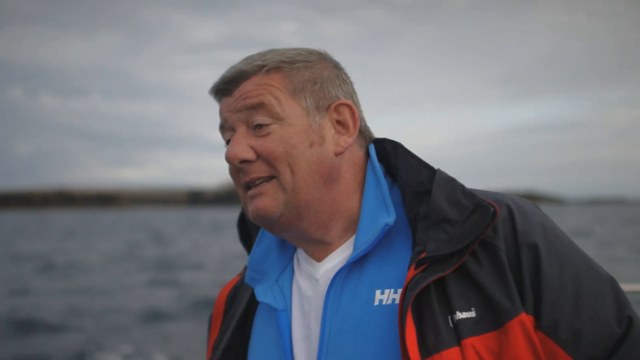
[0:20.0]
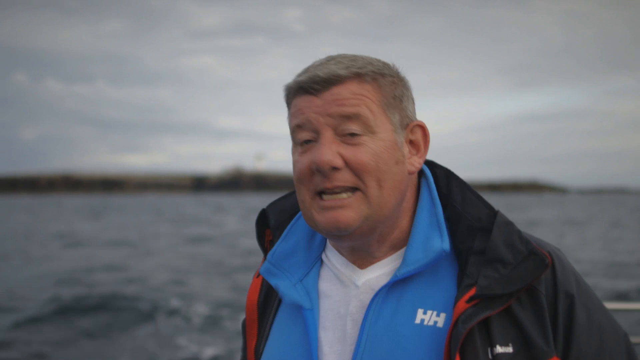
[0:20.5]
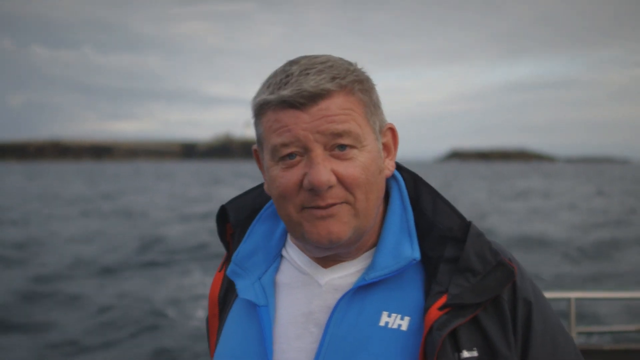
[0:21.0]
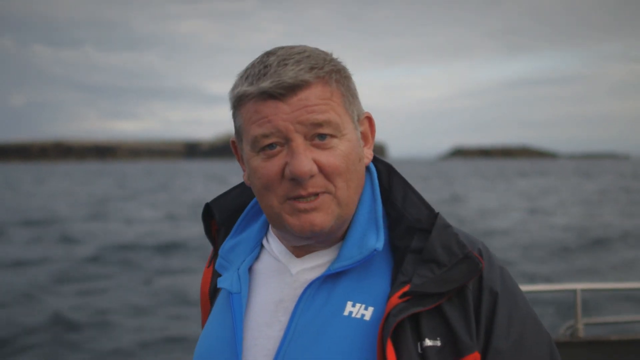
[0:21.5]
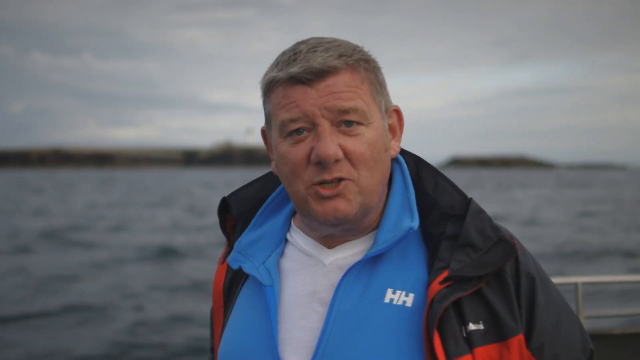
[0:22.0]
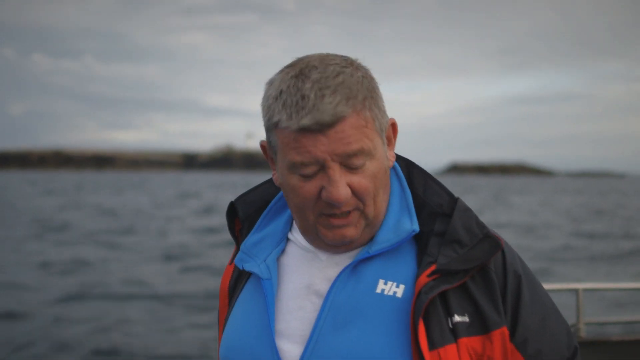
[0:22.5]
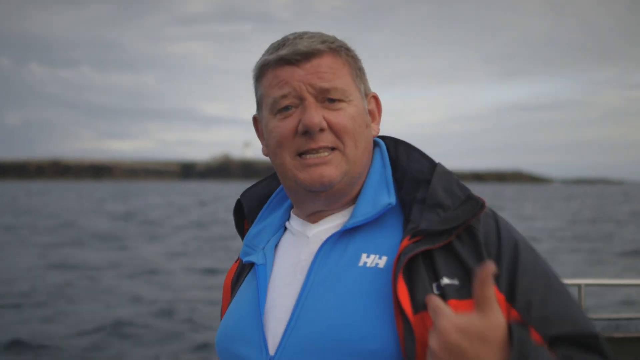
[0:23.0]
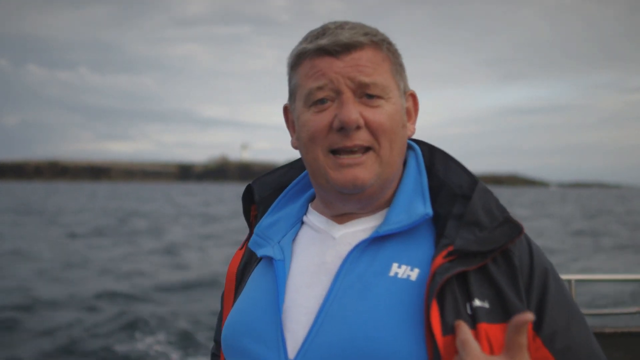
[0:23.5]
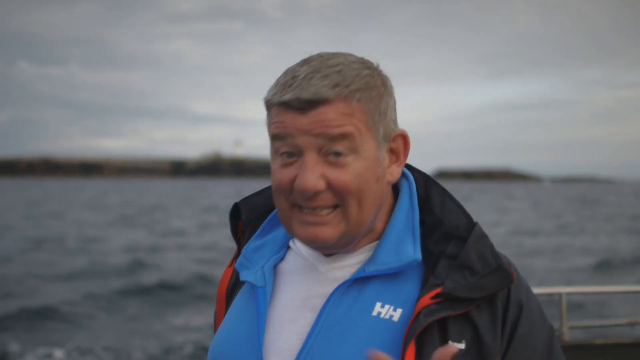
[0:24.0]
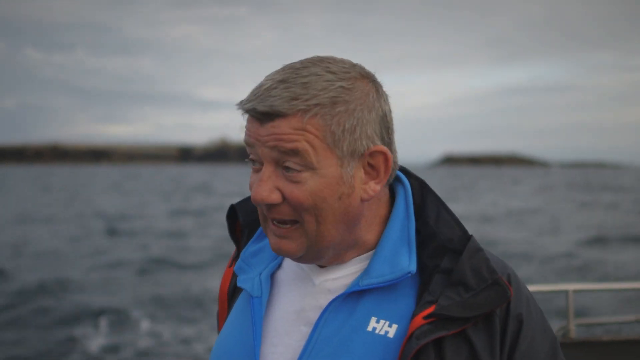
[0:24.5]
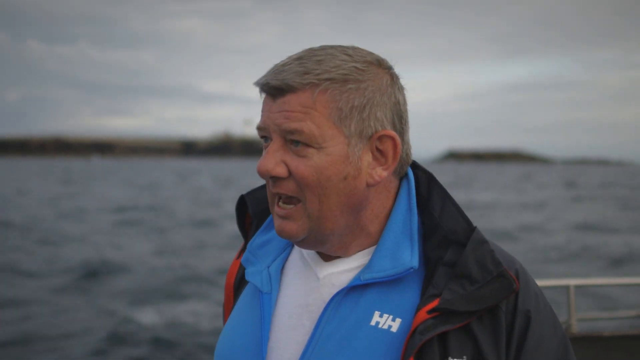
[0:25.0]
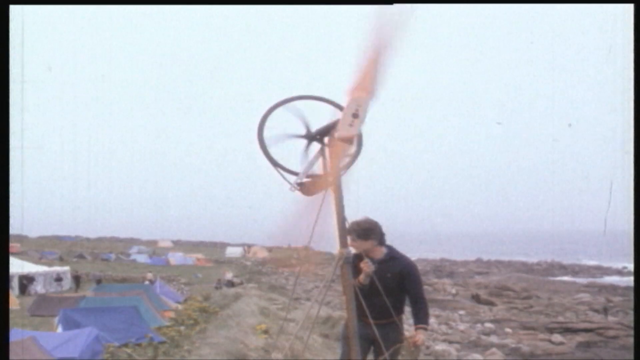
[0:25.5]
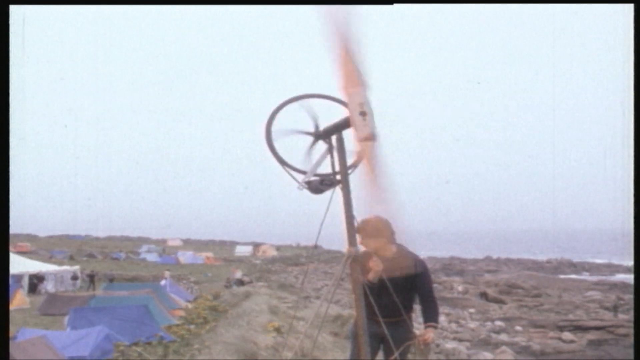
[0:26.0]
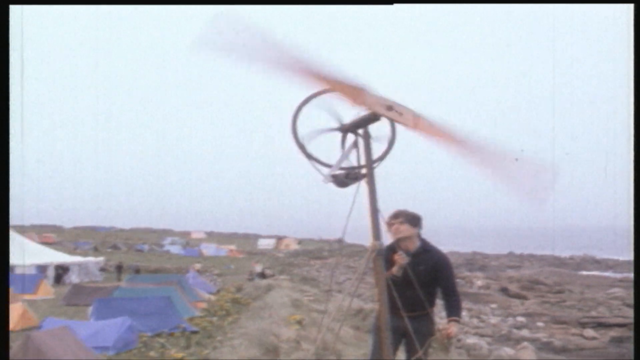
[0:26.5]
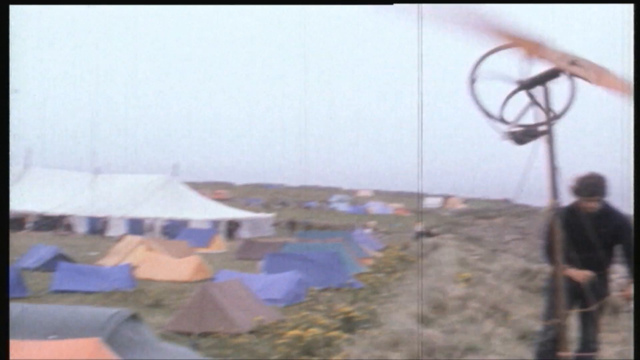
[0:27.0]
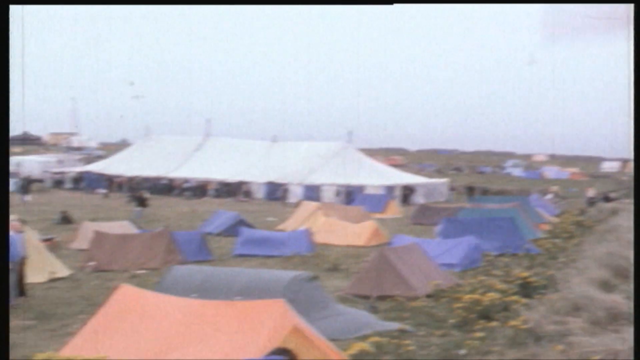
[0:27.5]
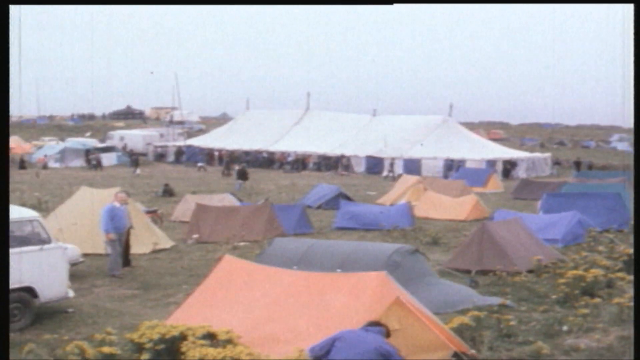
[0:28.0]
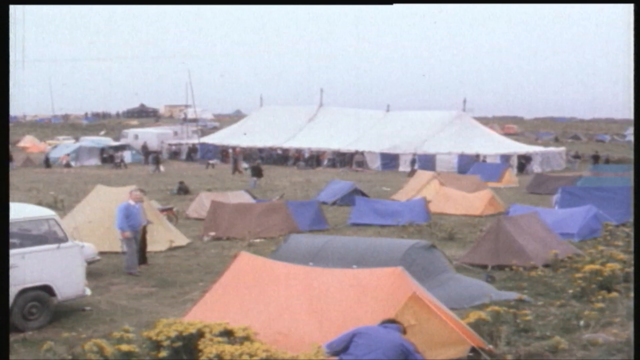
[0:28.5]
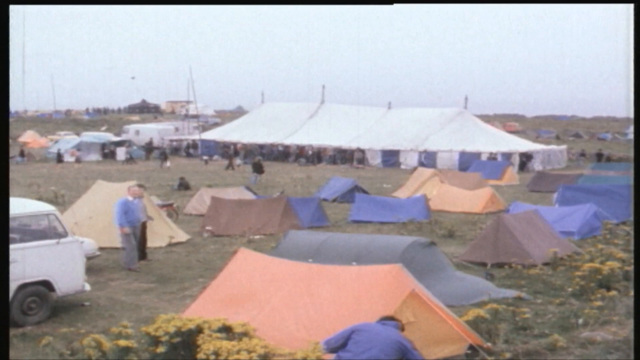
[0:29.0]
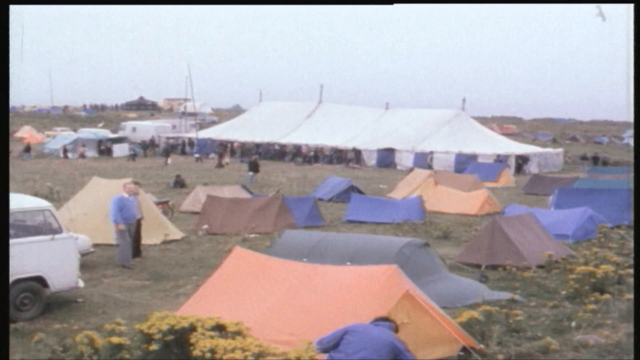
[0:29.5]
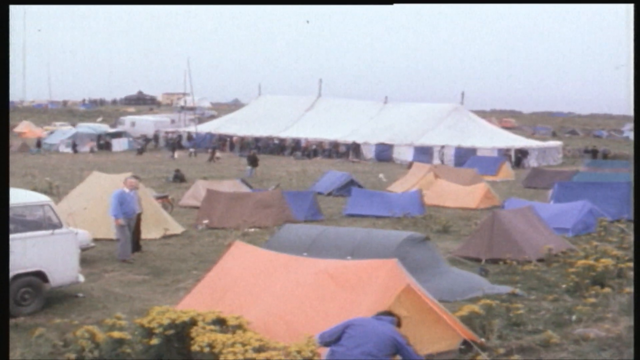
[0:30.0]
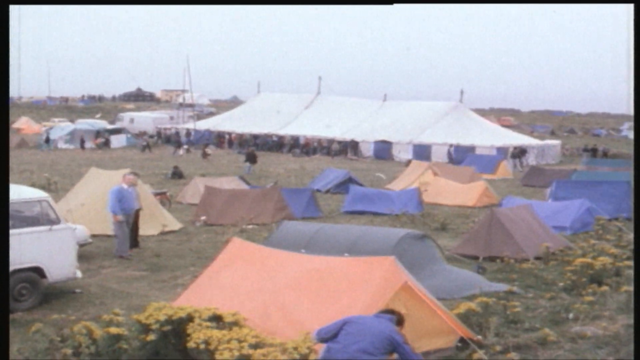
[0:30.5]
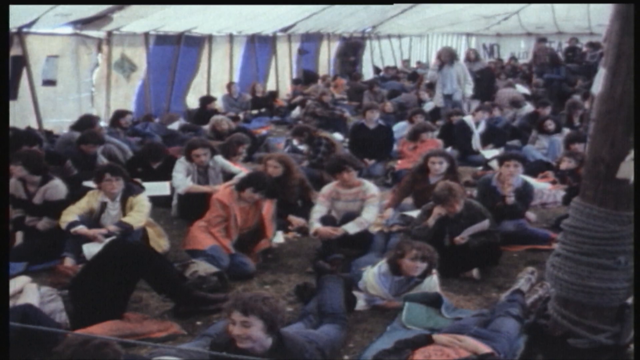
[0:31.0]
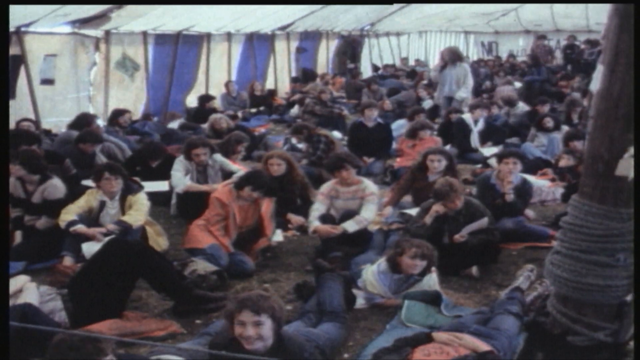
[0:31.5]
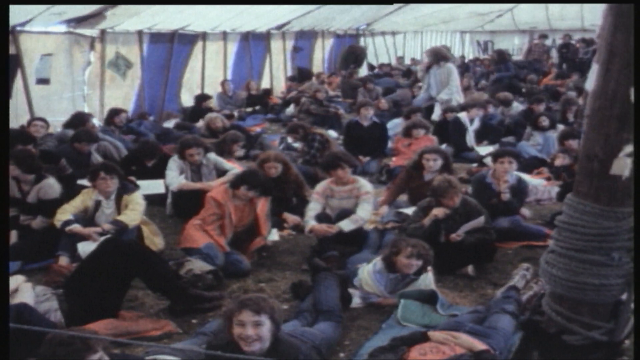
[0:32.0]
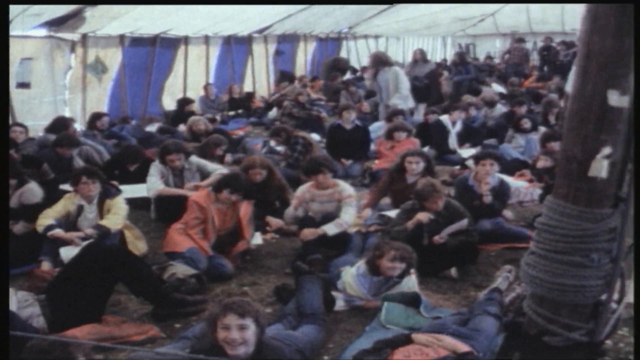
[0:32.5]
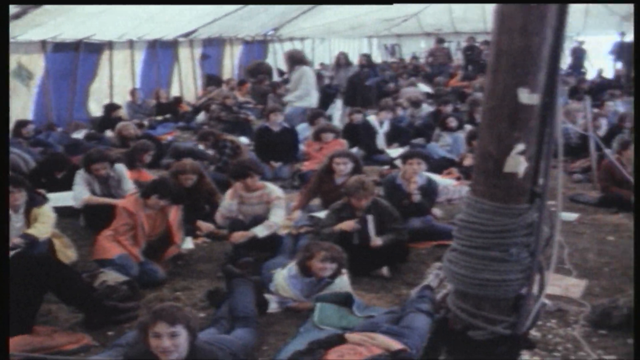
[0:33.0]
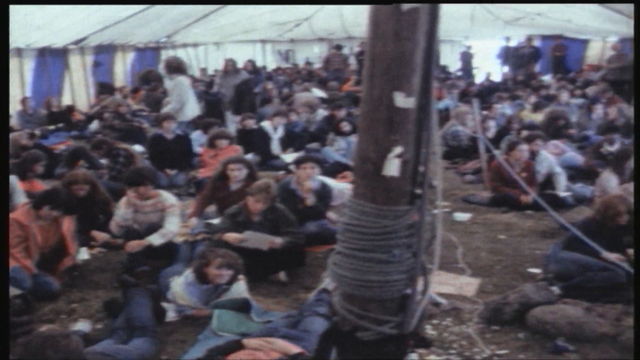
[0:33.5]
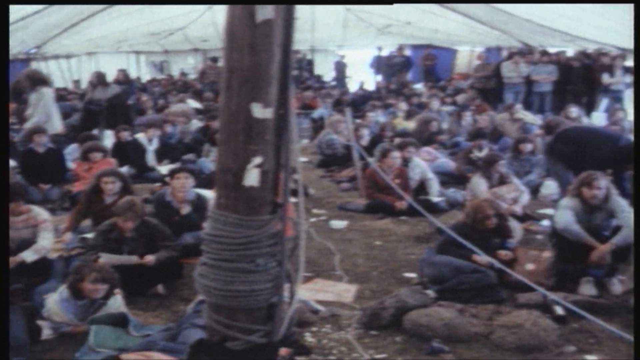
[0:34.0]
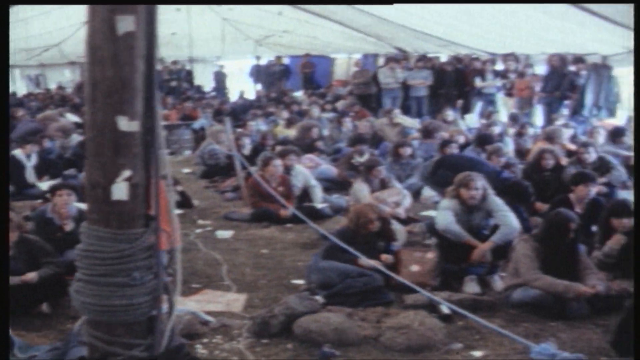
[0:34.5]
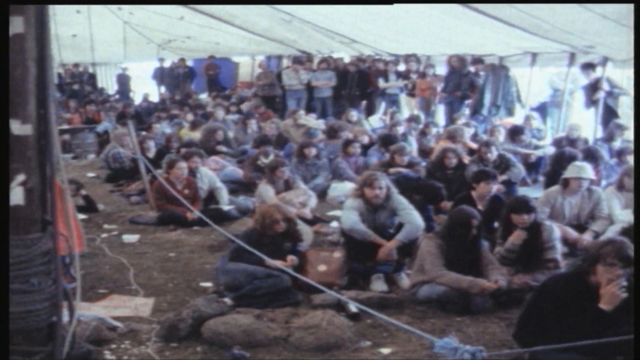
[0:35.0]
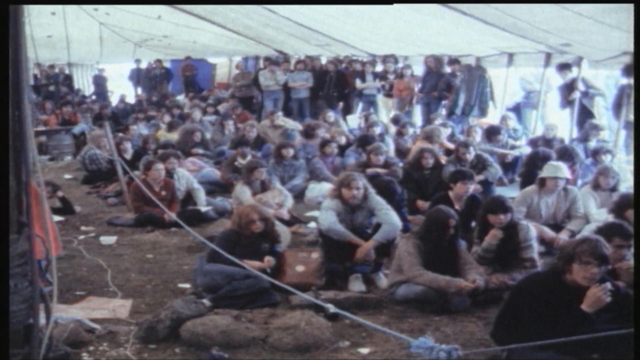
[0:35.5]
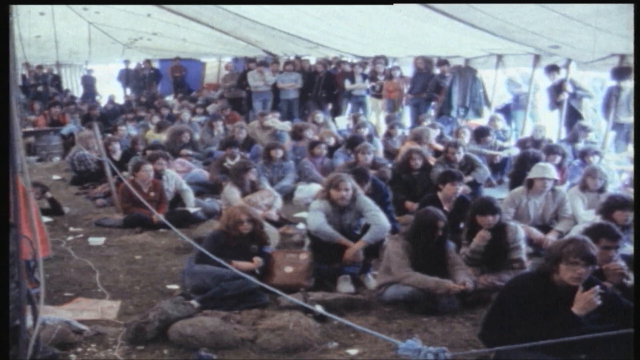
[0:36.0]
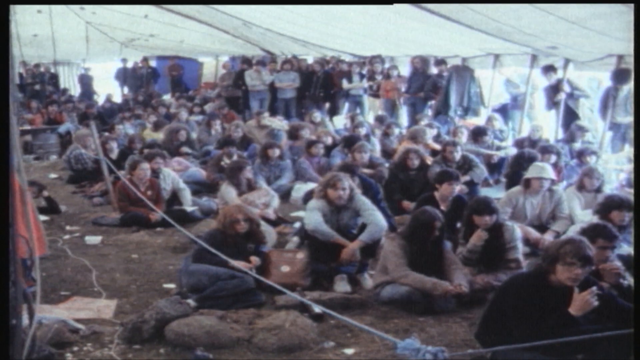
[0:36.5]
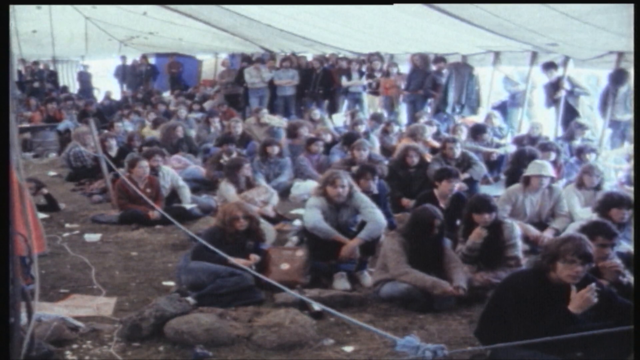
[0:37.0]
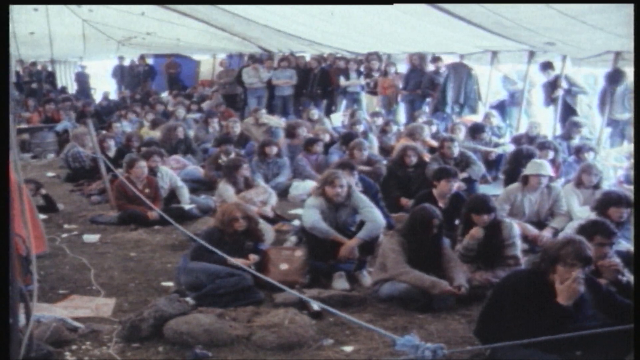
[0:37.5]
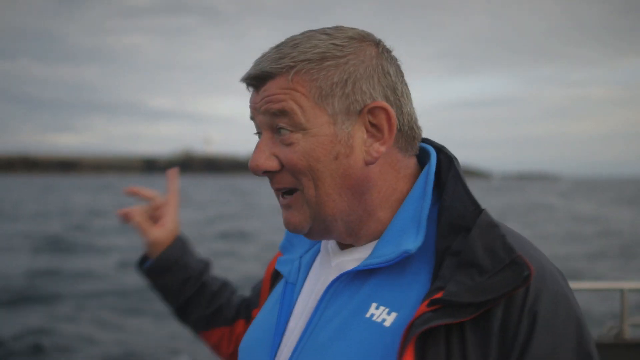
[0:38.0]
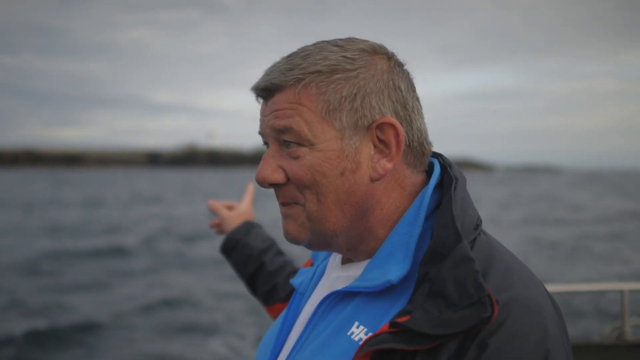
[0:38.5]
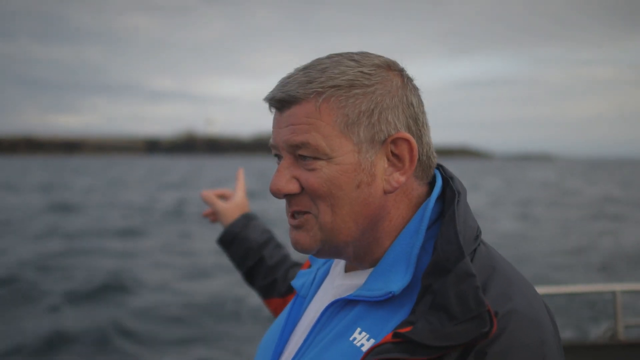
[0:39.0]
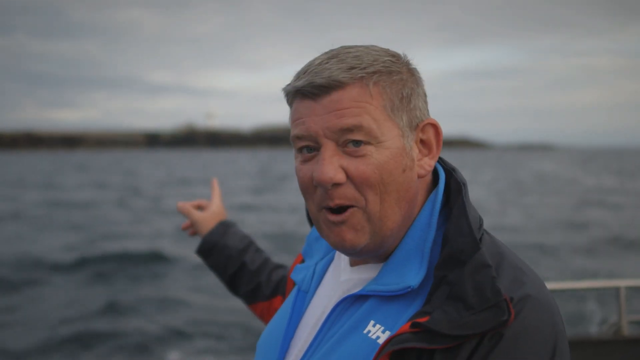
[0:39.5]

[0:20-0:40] The man continues to speak. He is a middle-aged man wearing a jacket with a sweater underneath and what looks like a v-neck t-shirt under that, and he talks into the camera while drifting on the sea. A shot then shows someone using a wind turbine that looks homemade from a bicycle wheel and an airplane propeller or something similar. There is a small village of nothing but tents, all sorts of tents with a large pavilion tent in the middle, possibly some type of festival. The footage is from the 70s or early 80s. Many people are gathered inside the main tent, kind of sitting huddled as if waiting for something to happen. The video cuts back to the man on the boat, who points back to the island.